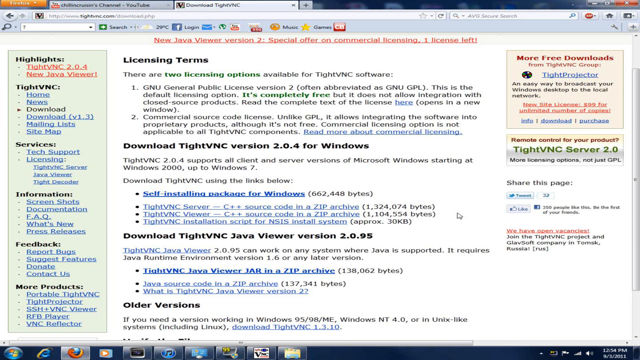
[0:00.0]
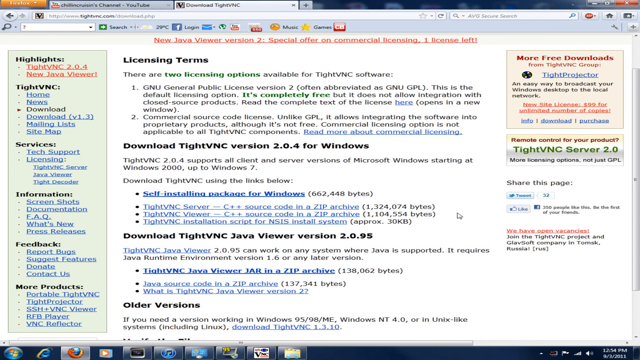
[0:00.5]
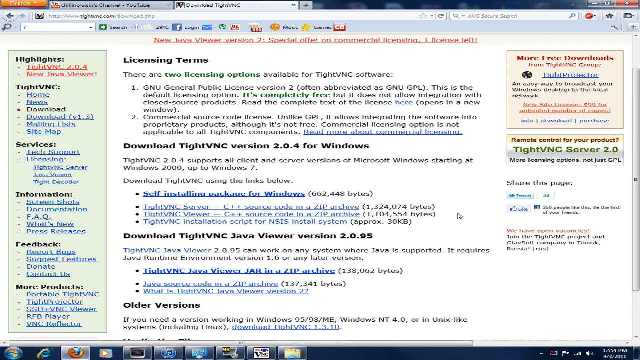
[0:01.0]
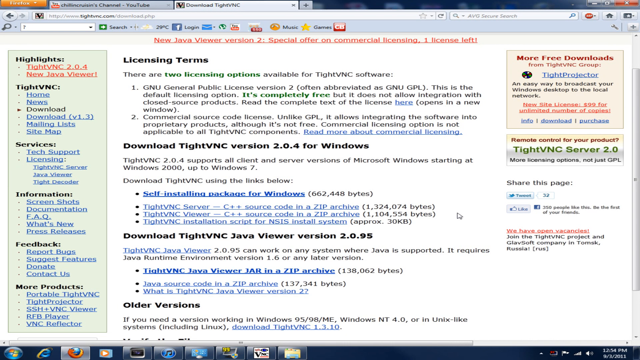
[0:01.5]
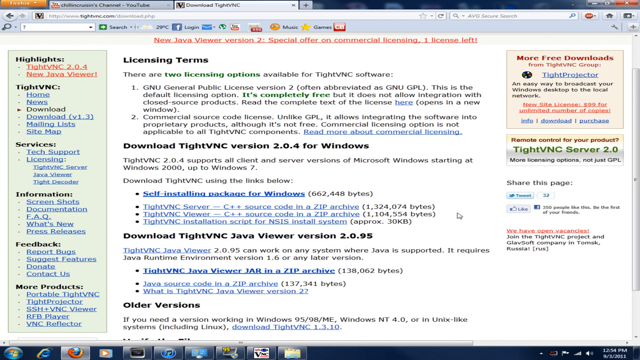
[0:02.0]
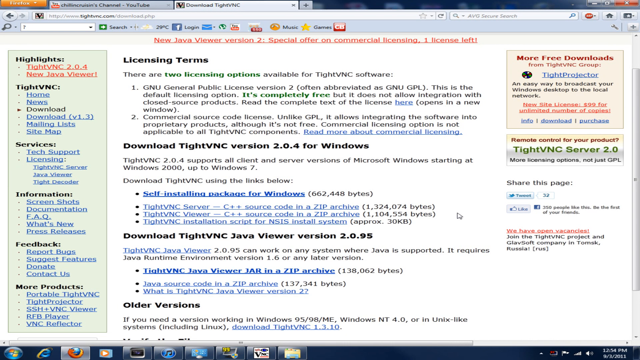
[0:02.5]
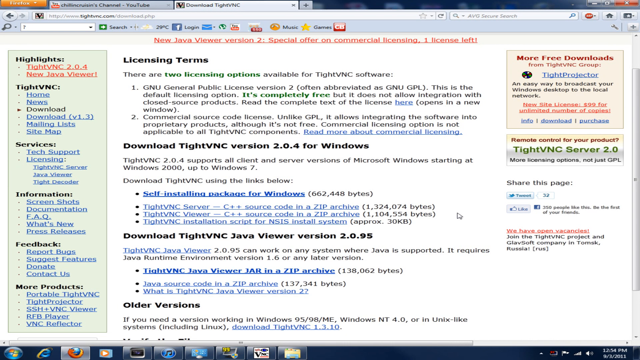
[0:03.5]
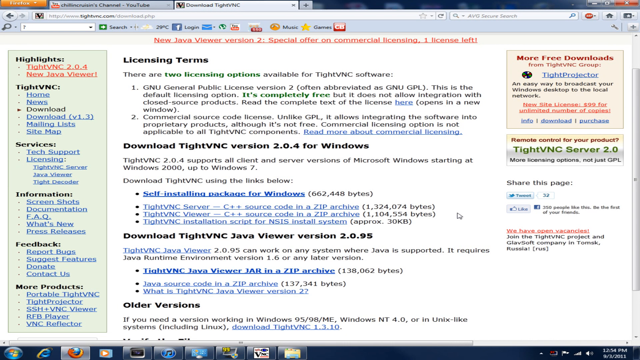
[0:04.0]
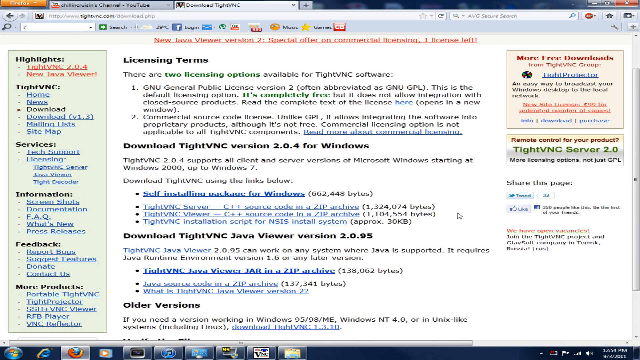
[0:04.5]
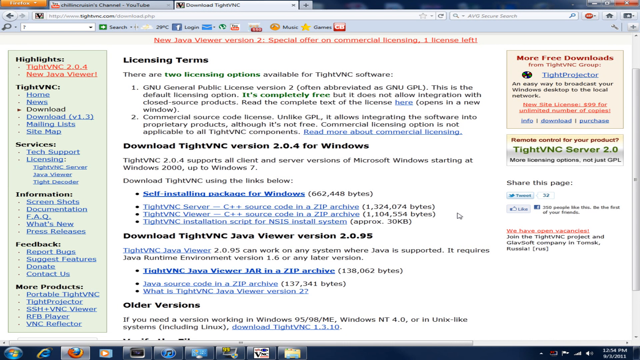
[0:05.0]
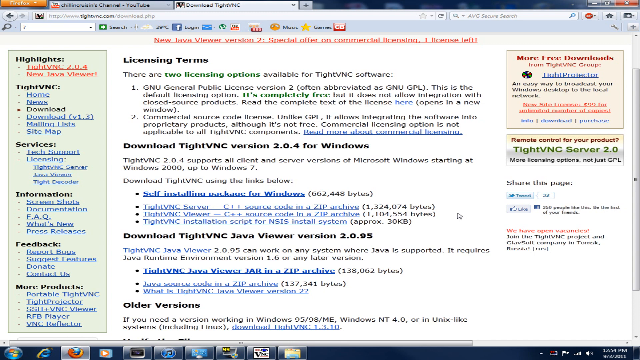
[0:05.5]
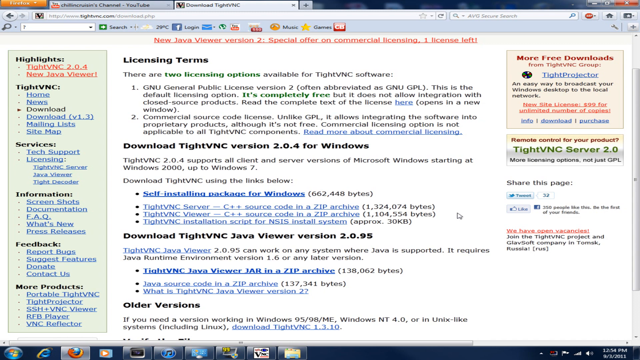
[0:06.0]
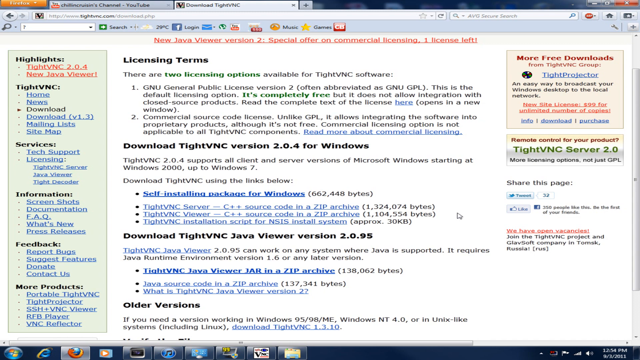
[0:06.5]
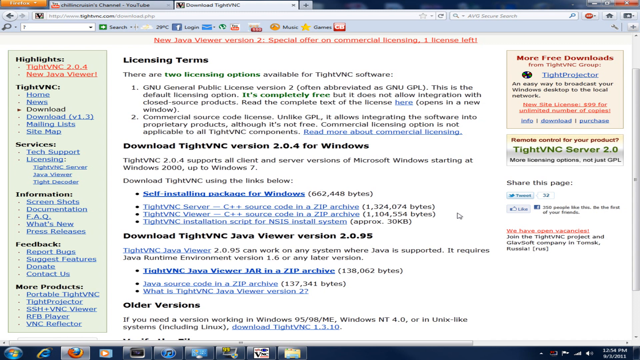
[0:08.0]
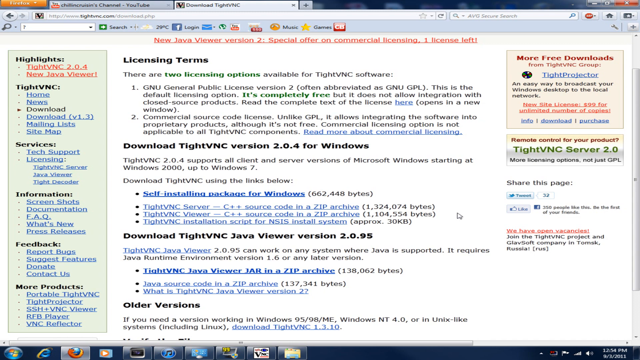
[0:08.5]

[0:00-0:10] The screen shows a website. At the very top, written in red, it says "new Java viewer version 2 special offer on commercial licensing one license left". Underneath that it says "licensing terms" and "There are two licensing options available for typed VNC software": "GNU General Public License version 2" and, as number 2, "Commercial Source Code License". Below that it says "download typed vnc version 2.0.4 for windows", followed by text about that version, and then, in bold black, "download type VNC java viewer version 2.0.95".